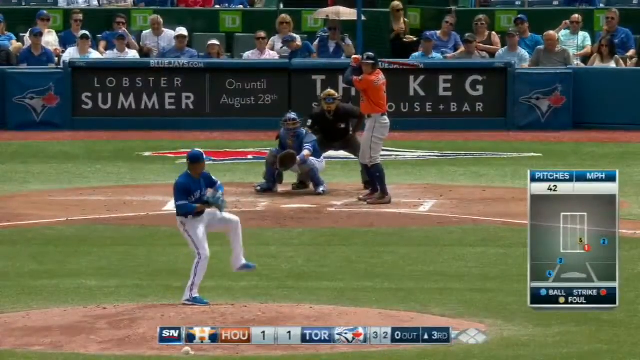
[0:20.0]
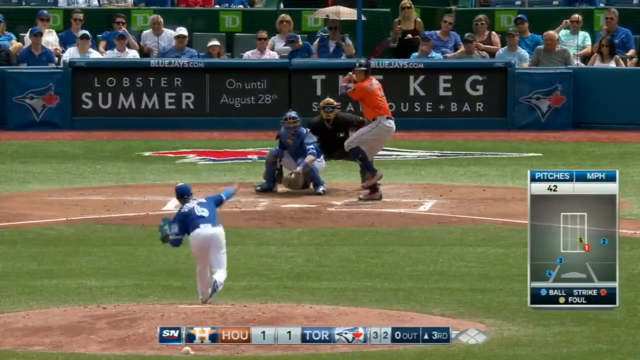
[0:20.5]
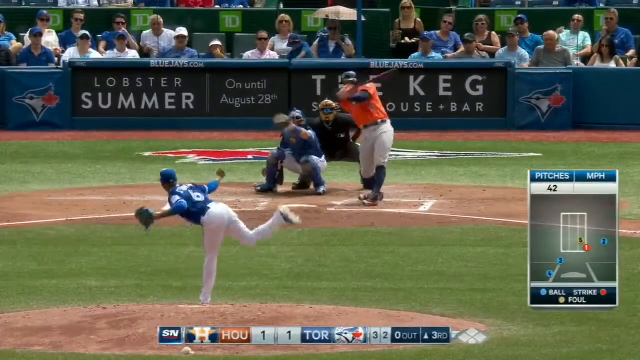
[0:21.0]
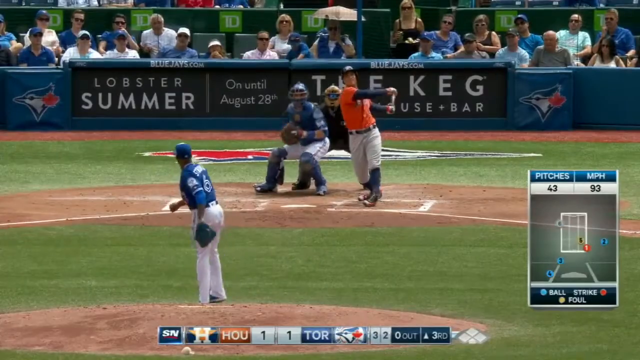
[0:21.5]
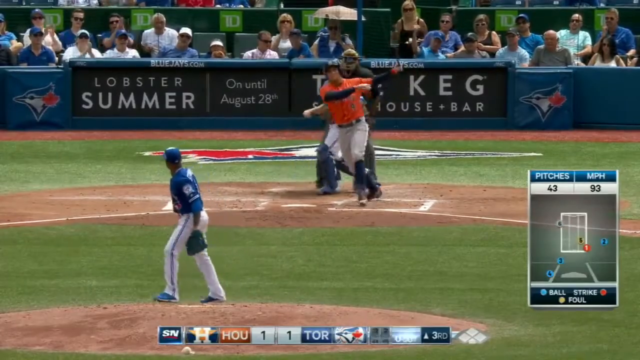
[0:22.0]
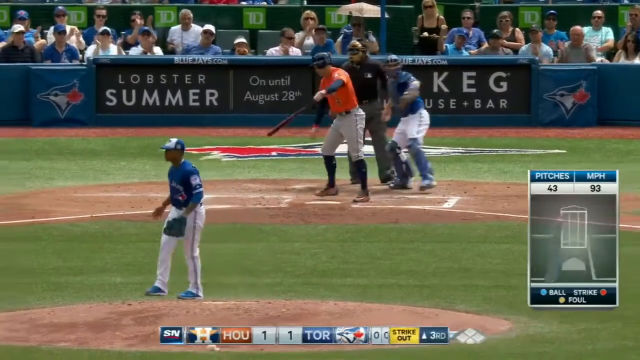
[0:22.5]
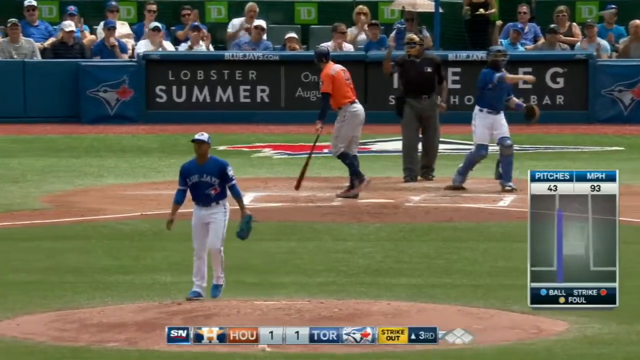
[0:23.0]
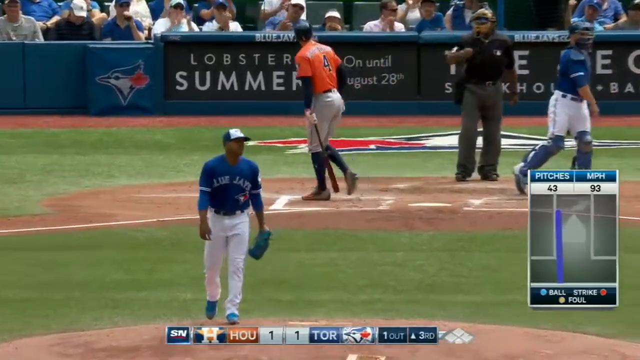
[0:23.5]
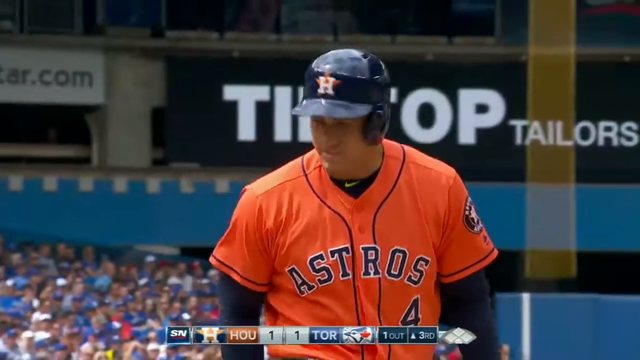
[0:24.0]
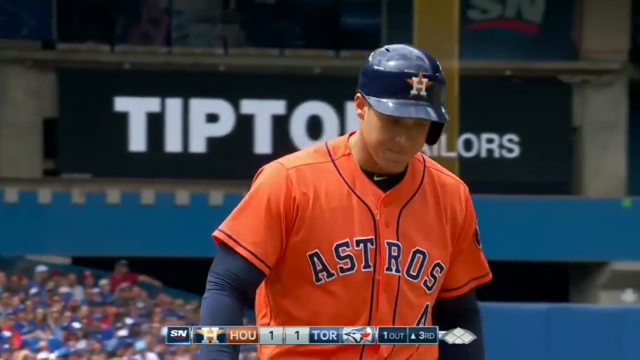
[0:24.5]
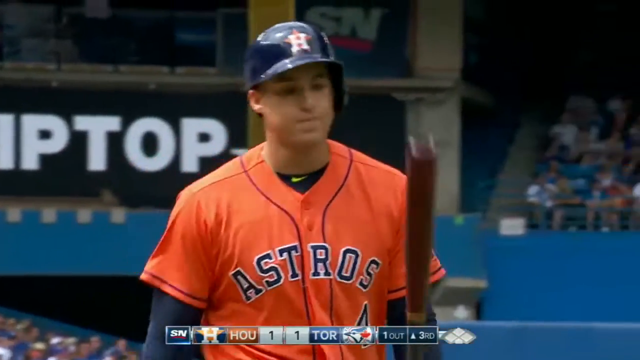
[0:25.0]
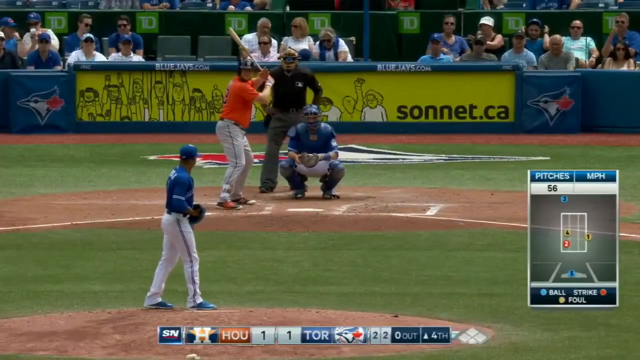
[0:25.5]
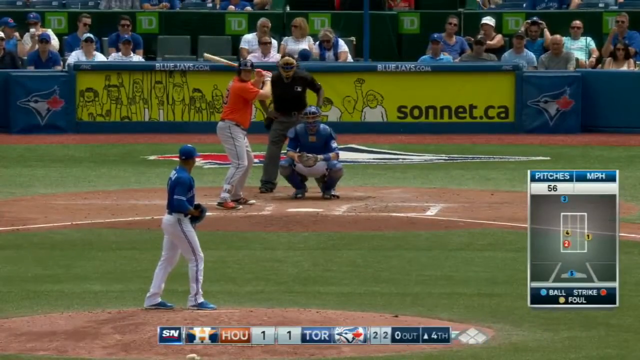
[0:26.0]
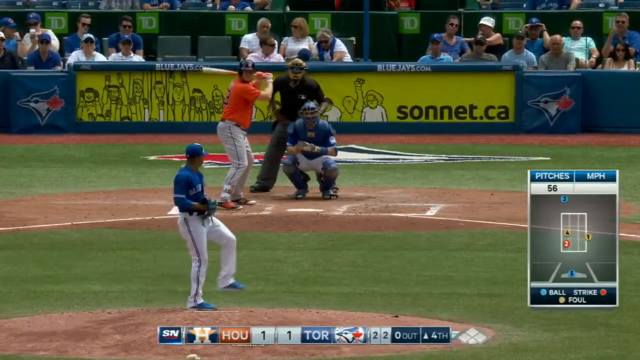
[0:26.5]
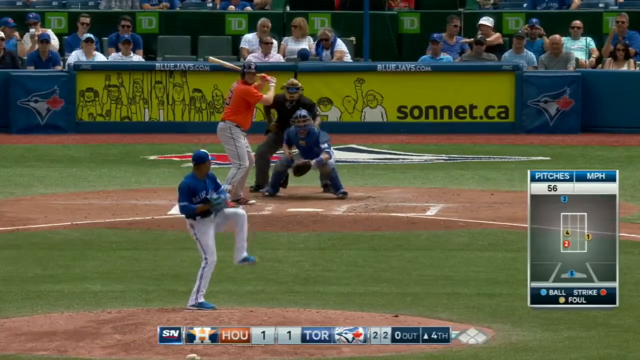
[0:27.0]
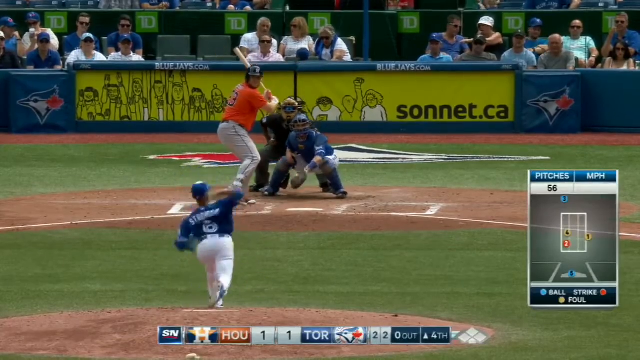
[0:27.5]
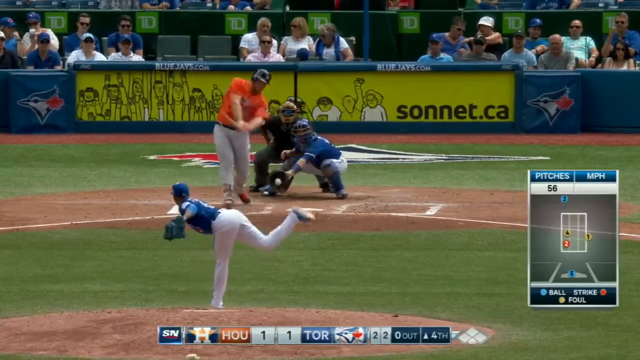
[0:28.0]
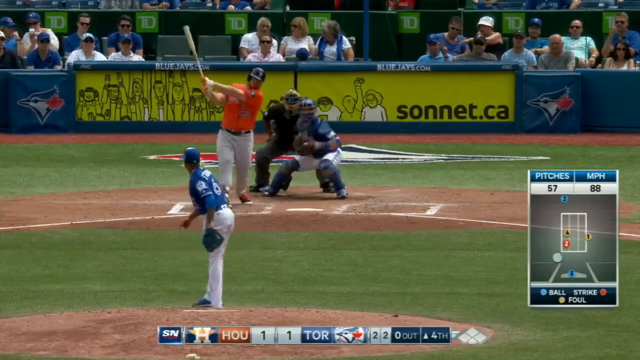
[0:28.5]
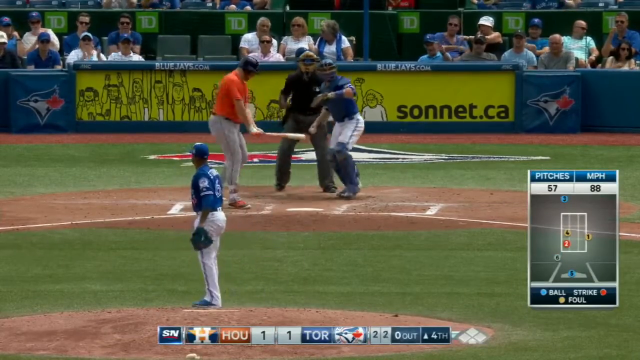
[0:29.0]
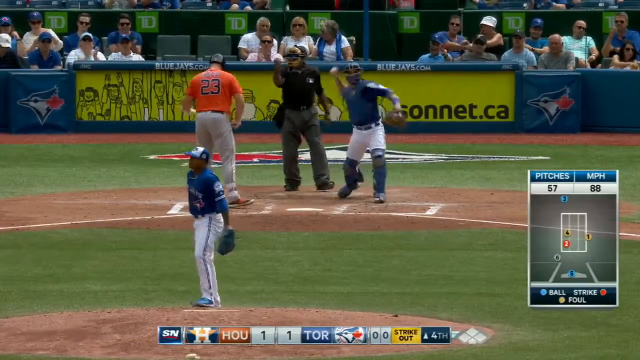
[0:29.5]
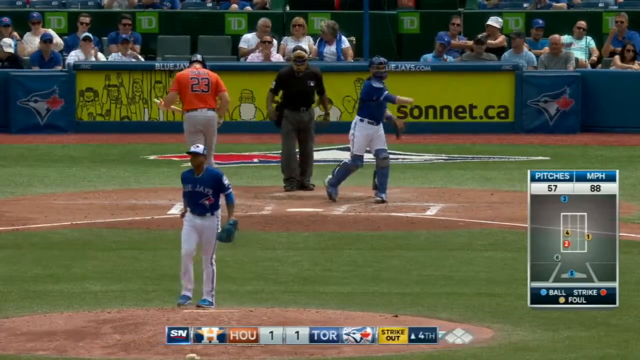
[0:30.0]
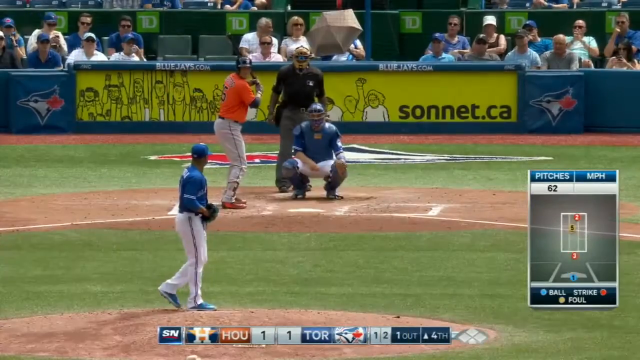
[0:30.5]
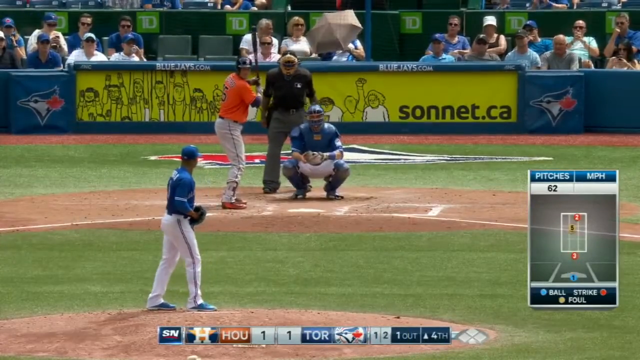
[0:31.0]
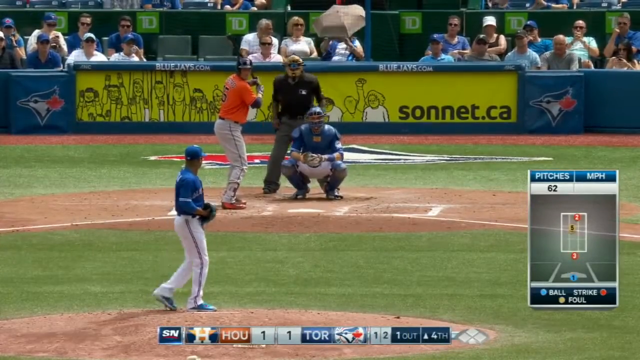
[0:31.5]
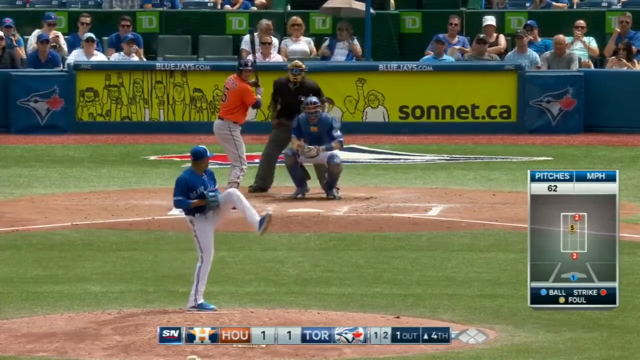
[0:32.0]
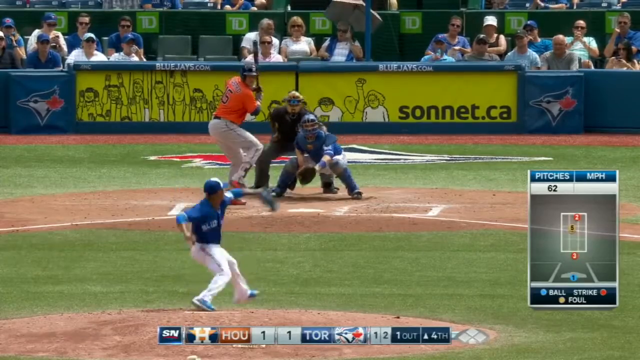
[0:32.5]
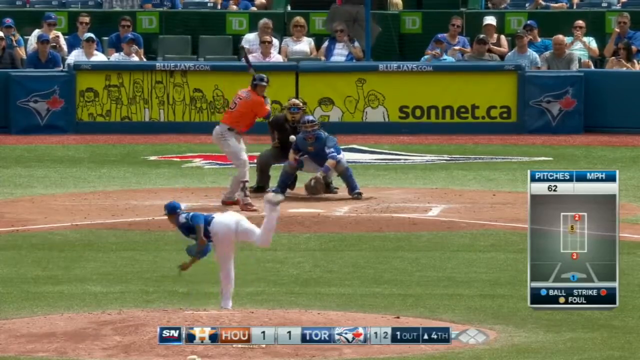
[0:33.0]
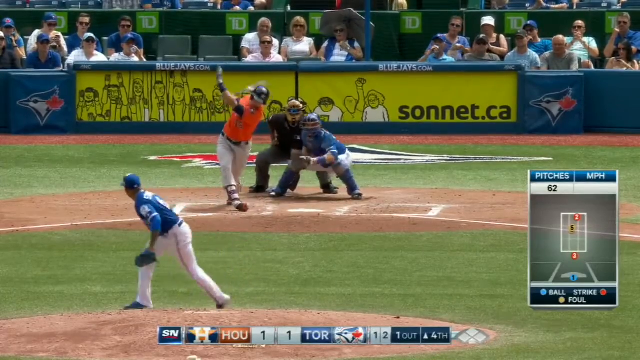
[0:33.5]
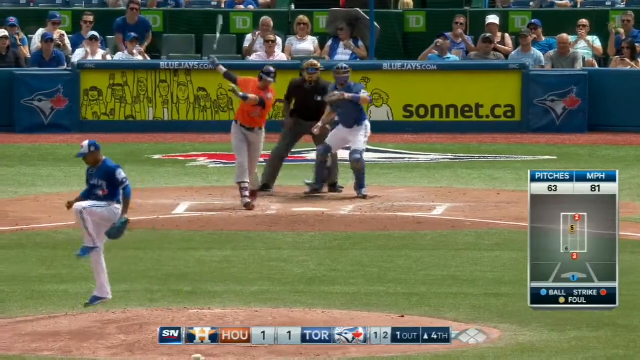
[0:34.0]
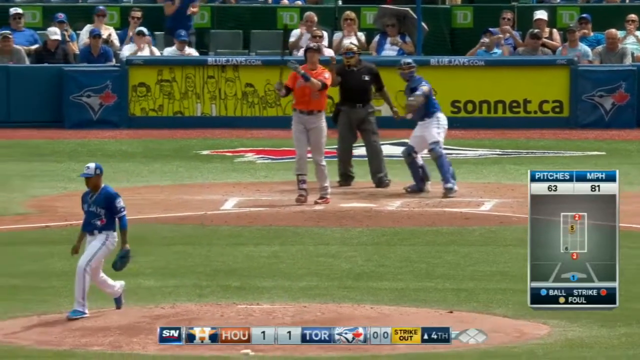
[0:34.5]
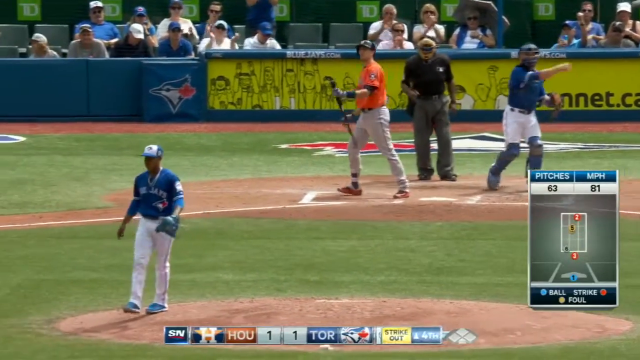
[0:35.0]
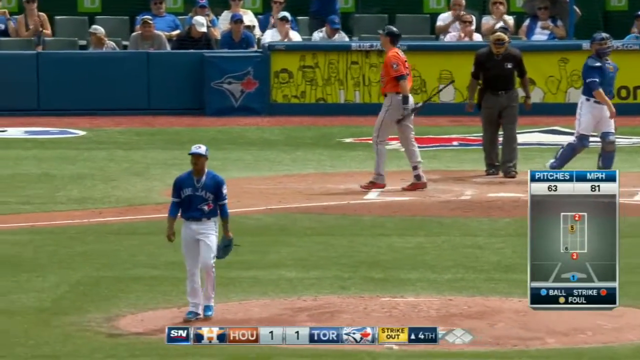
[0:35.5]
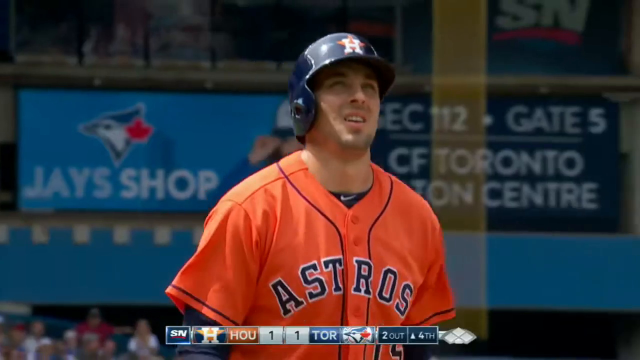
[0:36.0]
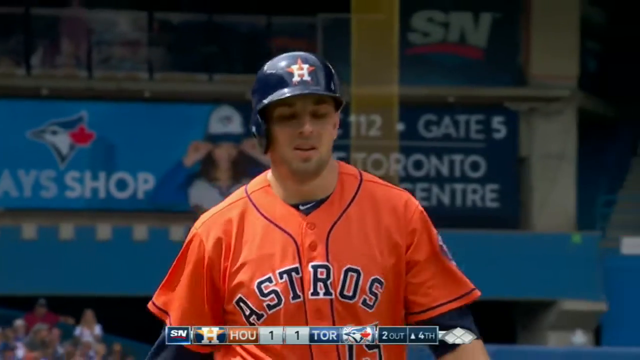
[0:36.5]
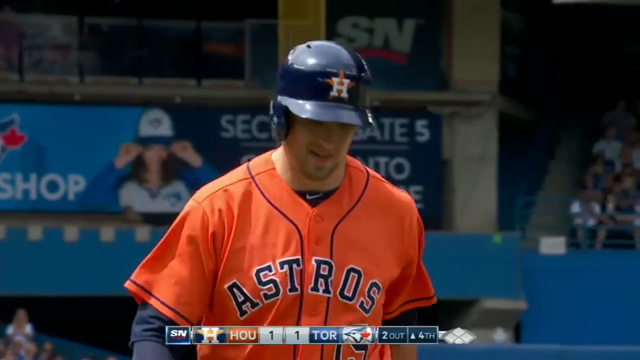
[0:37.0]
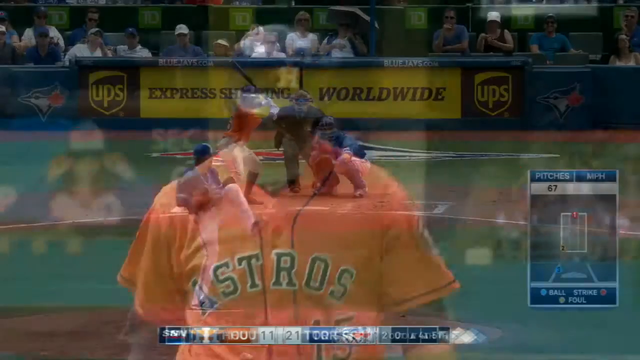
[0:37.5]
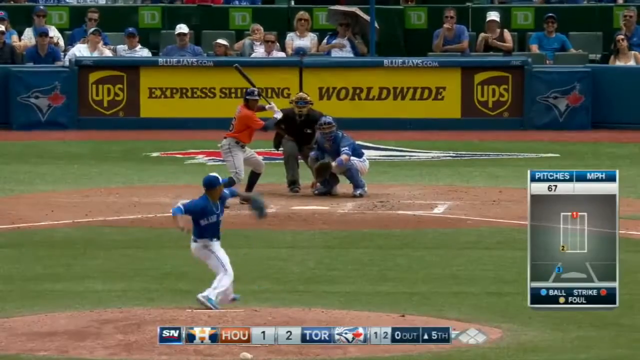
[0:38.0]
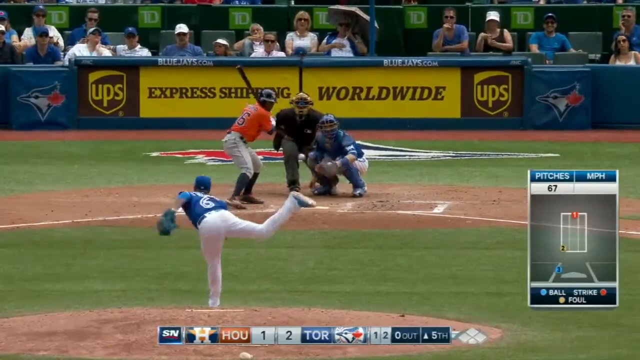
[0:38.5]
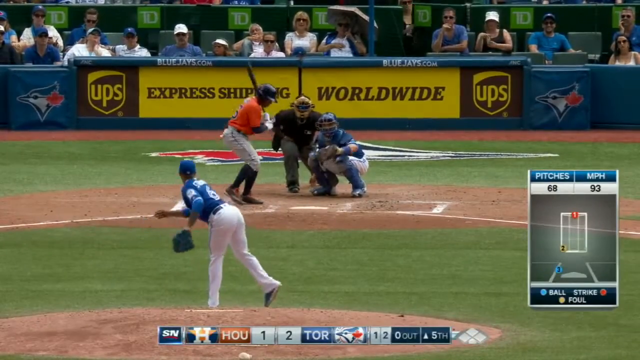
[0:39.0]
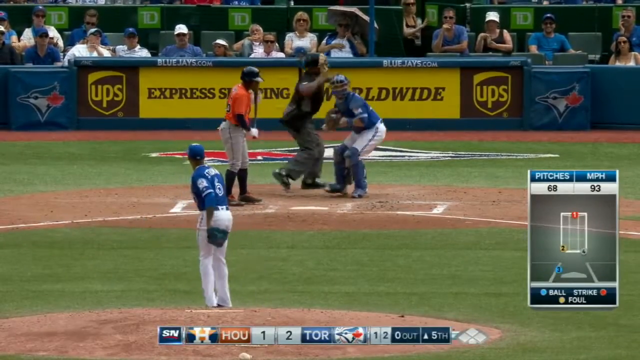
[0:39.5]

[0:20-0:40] Footage continues of the game between the Blue Jays, in blue, and the other team, in orange. A few people are visible in the crowd. Text reads "Lobster Summoner" and "on until August 28th", and there is text mentioning a keg. The Blue Jays pitcher is about to pitch, and "42 pitches" appears on screen; no count of balls, strikes or fouls is shown. He pitches and the batter hits it; these may be replays of different players, focusing on this pitcher striking people out. Another view shows a player from the orange team, with "sonic.ca", possibly a sponsor, on the wall in the background. There is a blue barrier with the Blue Jays symbol. "62 pitches" appears in the lower right of the screen. This pitch was 81 miles an hour; it passes over the plate and the player in orange is struck out, and another player apparently gets struck out as well.